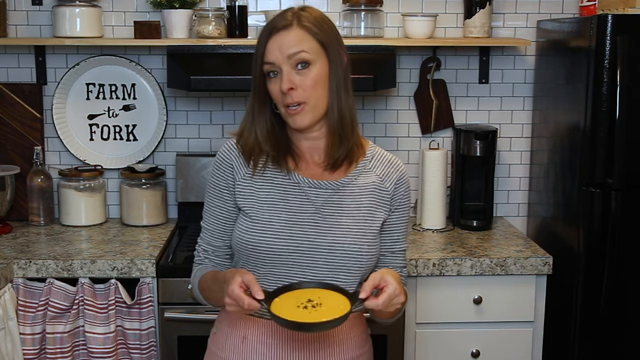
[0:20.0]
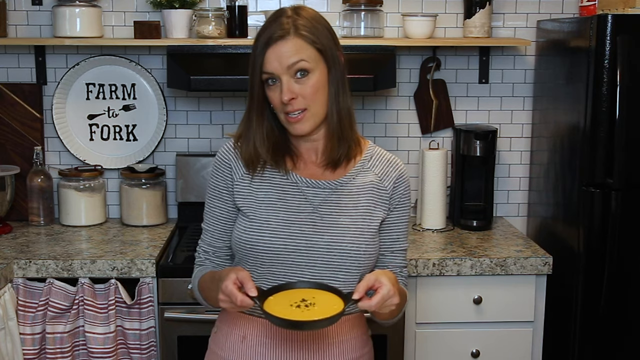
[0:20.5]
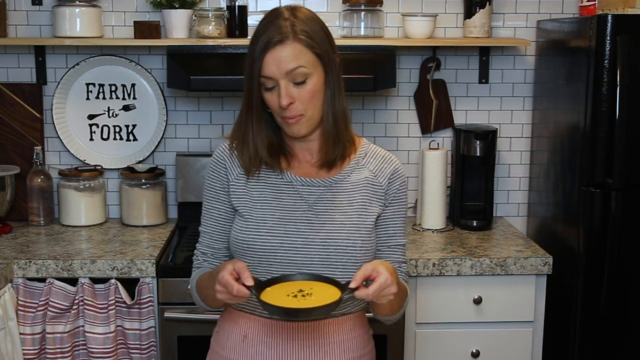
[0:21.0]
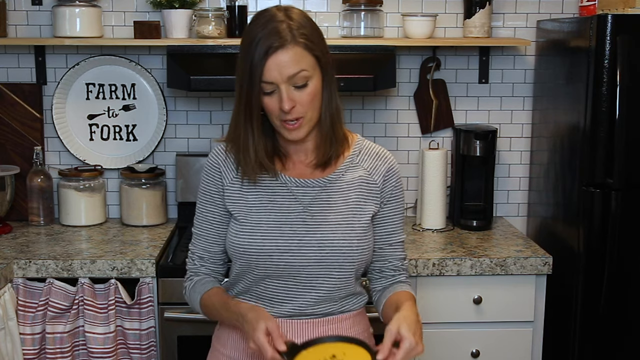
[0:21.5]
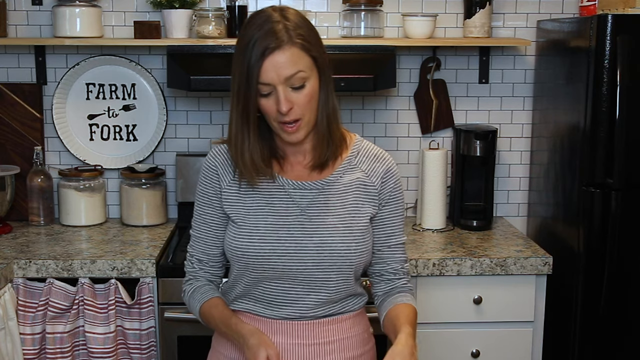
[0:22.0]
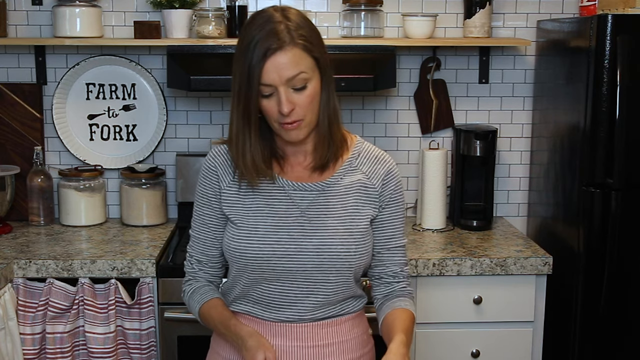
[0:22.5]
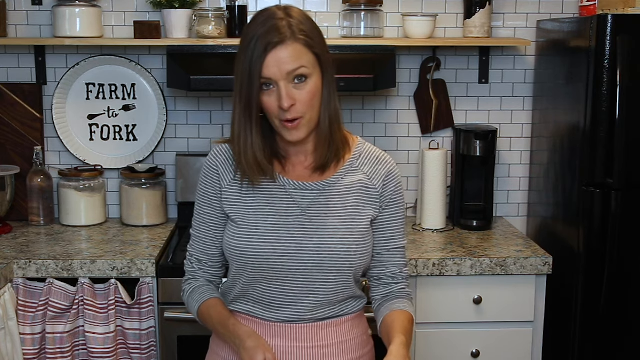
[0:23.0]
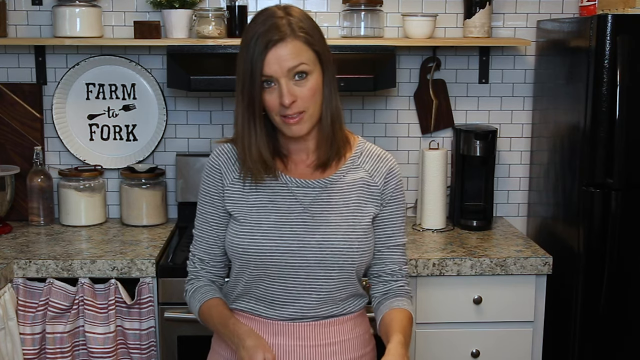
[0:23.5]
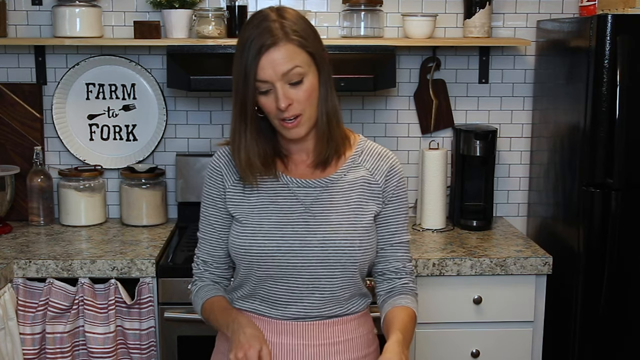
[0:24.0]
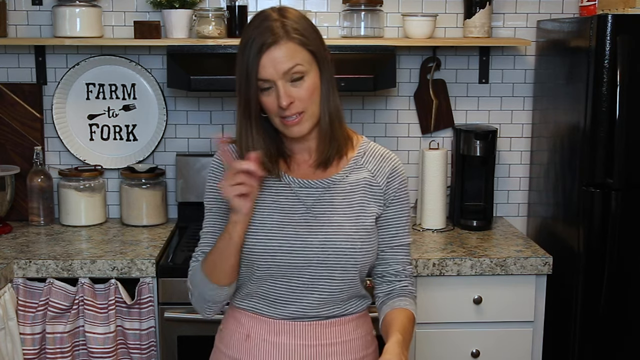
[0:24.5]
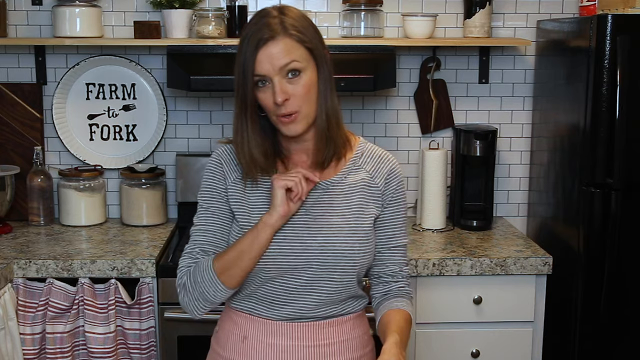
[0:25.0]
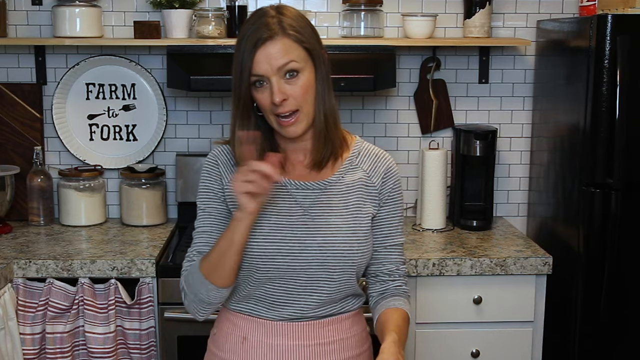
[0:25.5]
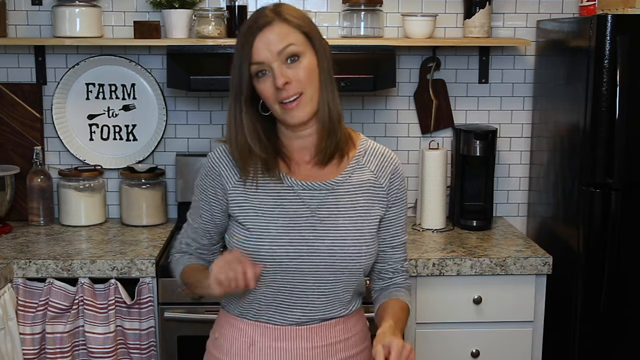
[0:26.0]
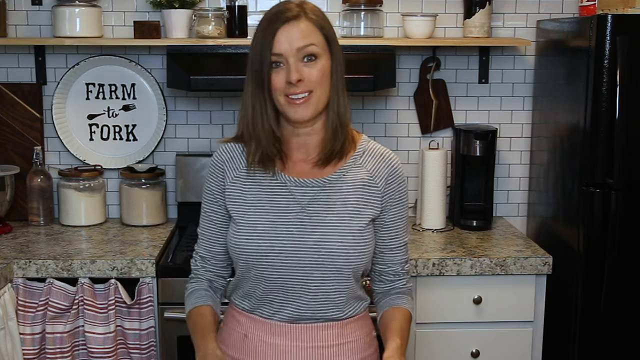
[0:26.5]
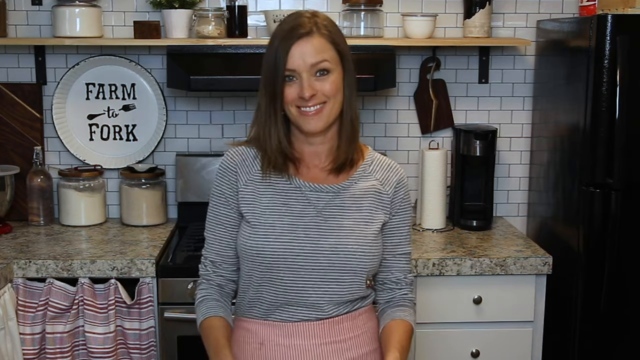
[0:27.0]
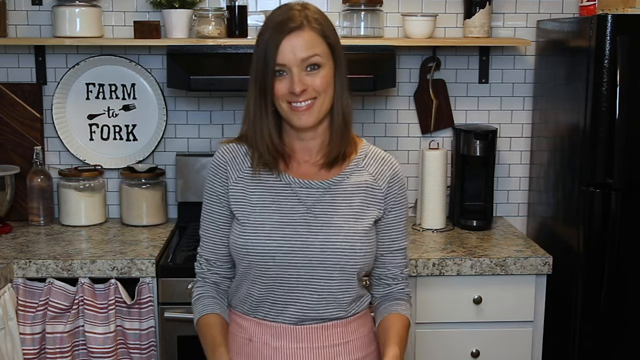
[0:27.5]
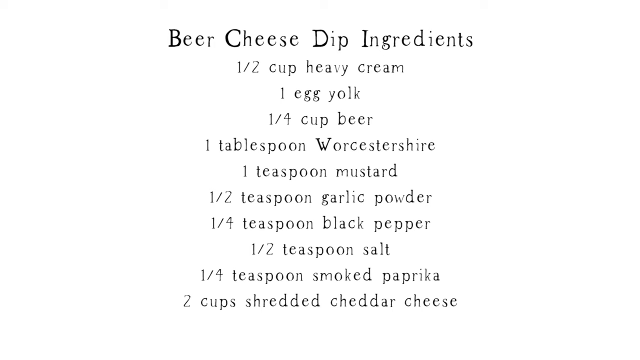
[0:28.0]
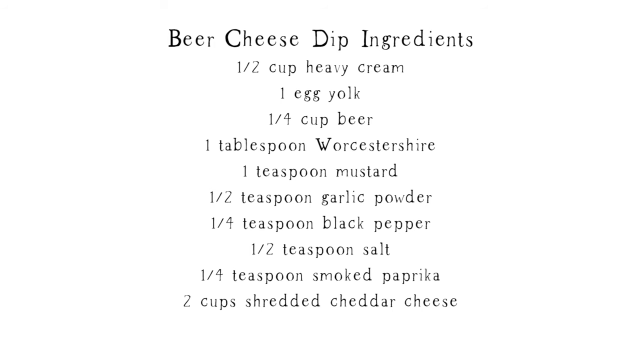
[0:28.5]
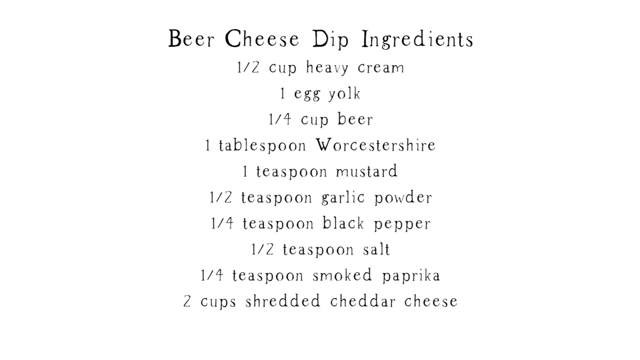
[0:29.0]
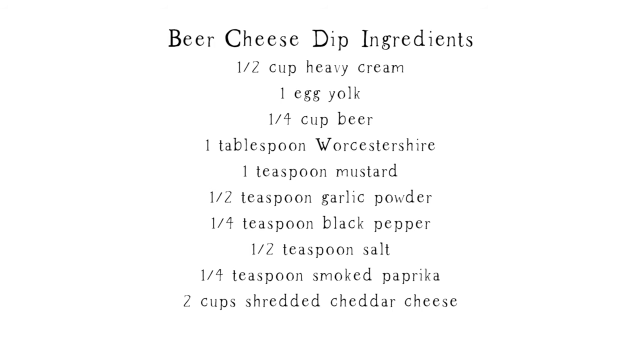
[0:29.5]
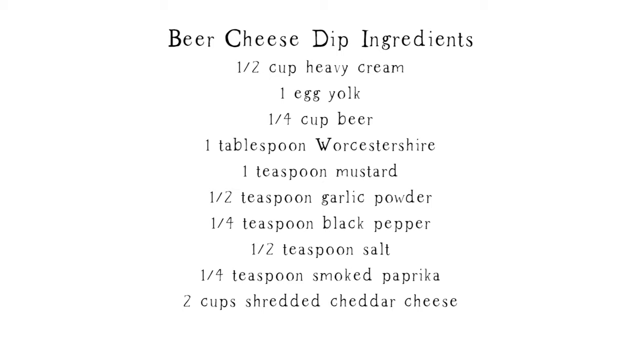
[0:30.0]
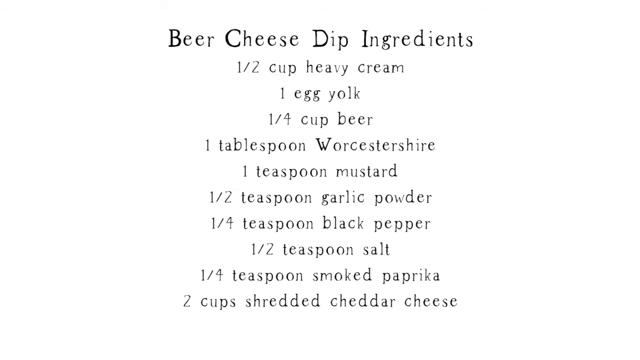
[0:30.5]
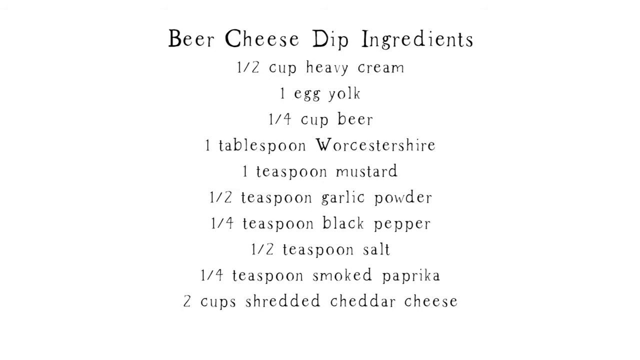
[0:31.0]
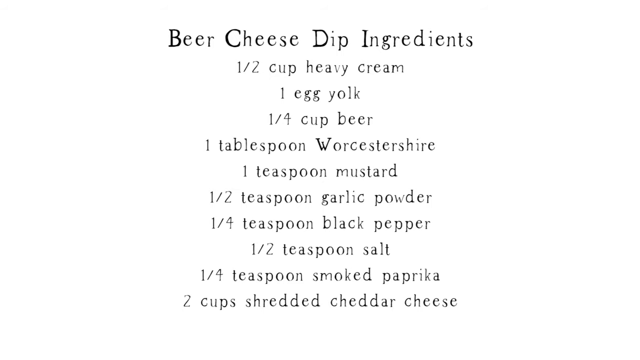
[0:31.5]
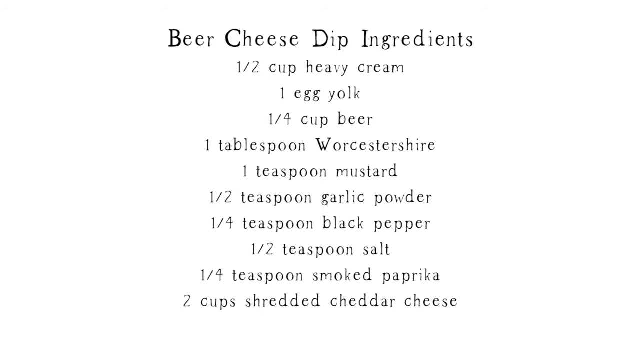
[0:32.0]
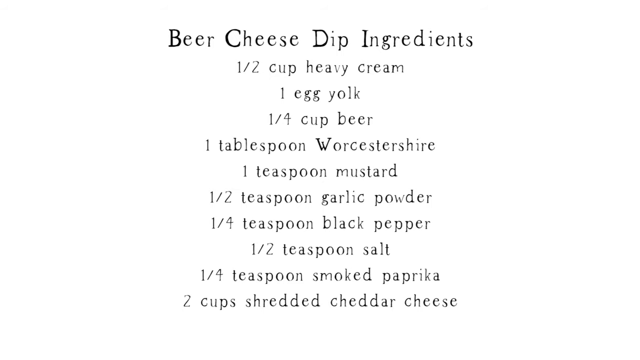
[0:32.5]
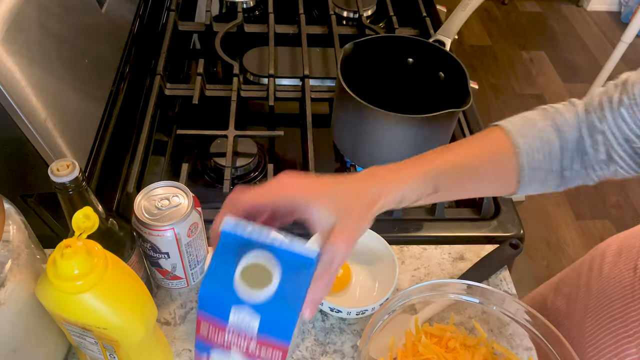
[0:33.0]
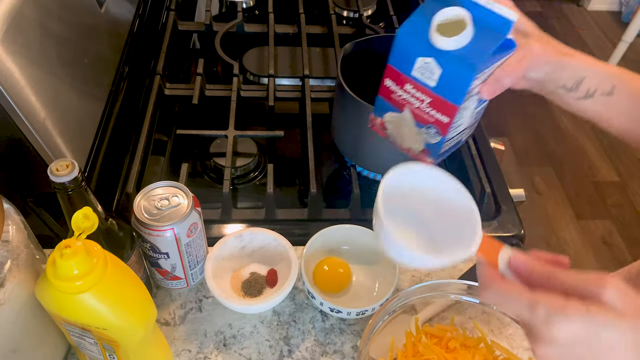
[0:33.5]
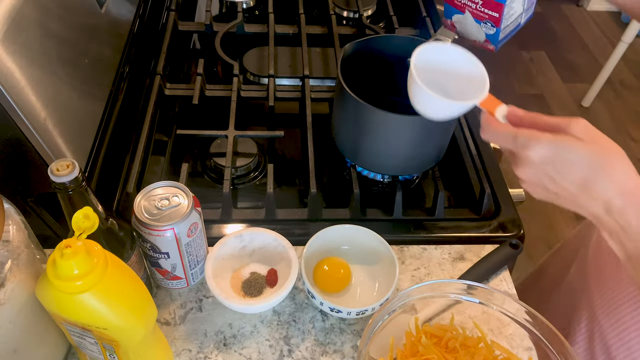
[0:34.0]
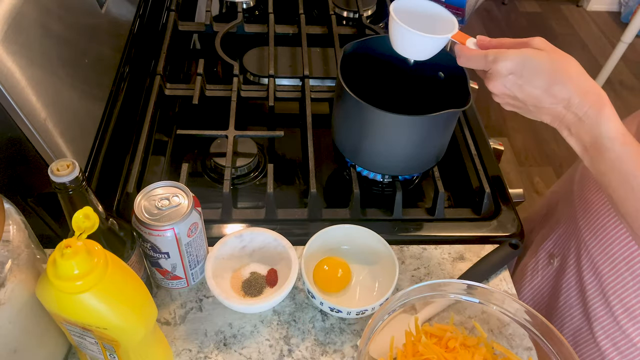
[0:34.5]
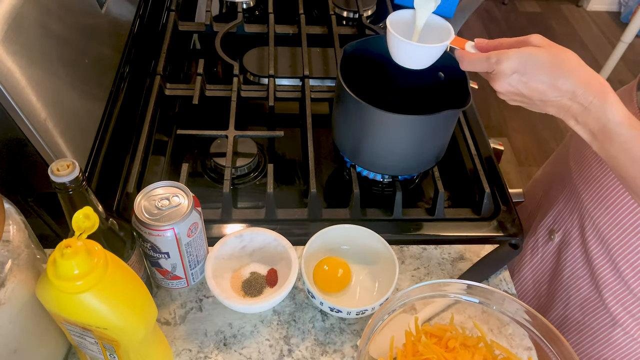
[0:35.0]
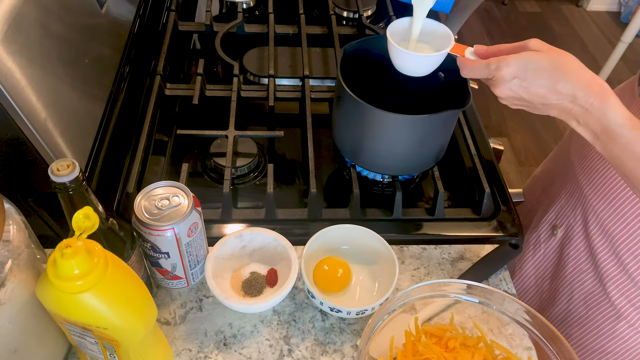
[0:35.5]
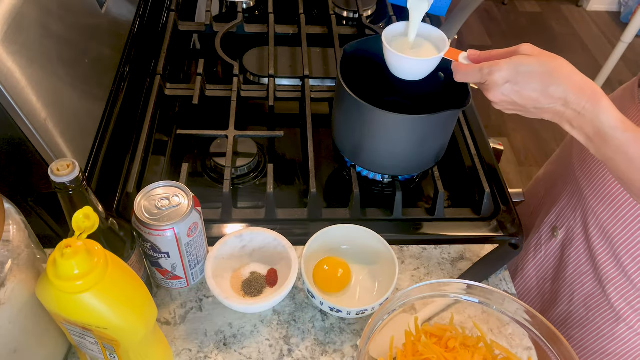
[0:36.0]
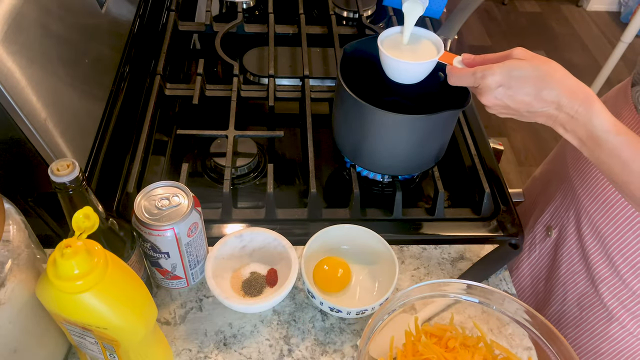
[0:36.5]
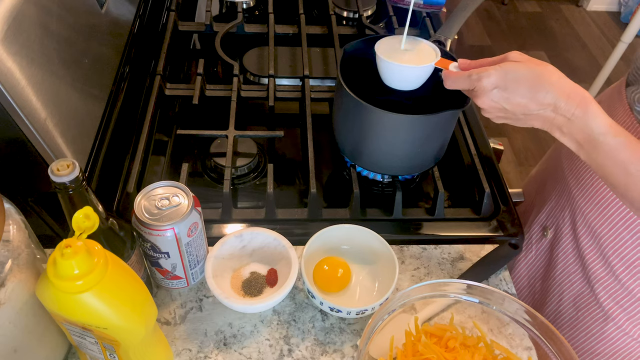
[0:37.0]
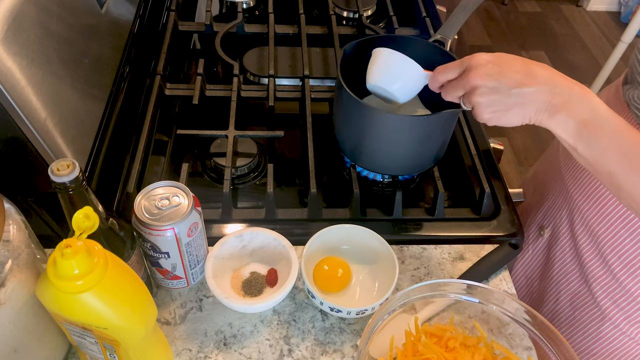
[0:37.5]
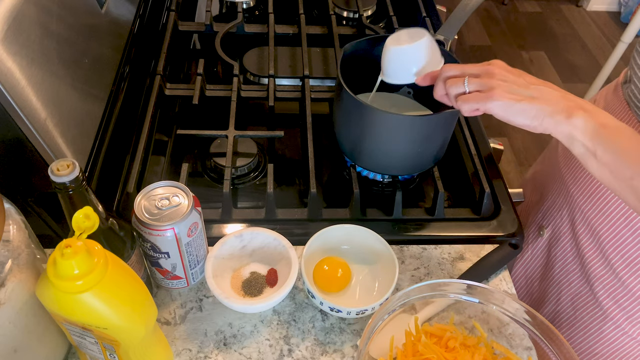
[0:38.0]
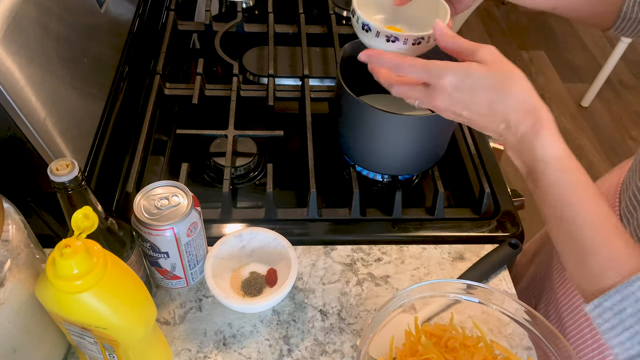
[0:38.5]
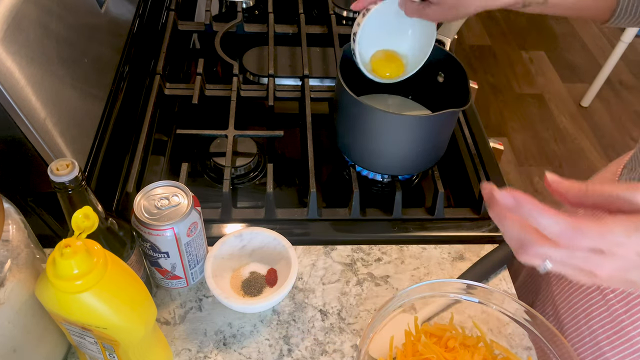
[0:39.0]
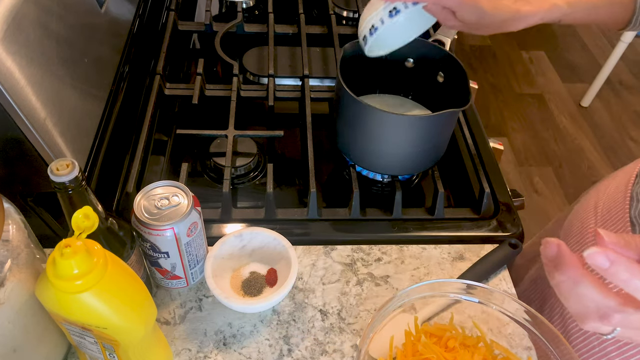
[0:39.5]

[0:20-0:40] The woman is very energetic. A stove is behind her. She holds up a small pan containing what looks like a yellow pie. Next, a step-by-step recipe for the beer cheese dip is shown. She starts by pouring milk into the cup and into the pan, followed by an egg yolk that goes into the pan. All the ingredients are on the table she is working at, in frame, waiting to be added.